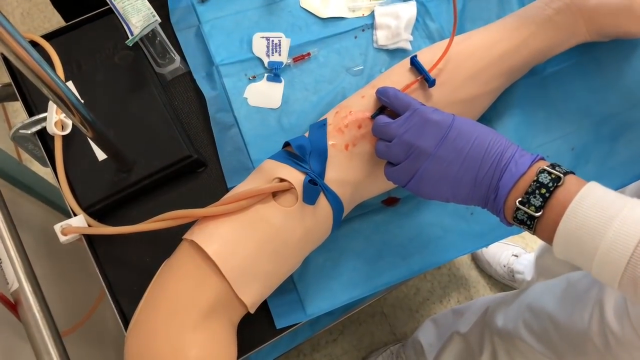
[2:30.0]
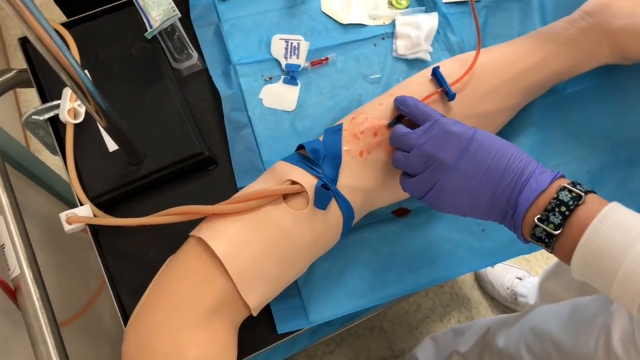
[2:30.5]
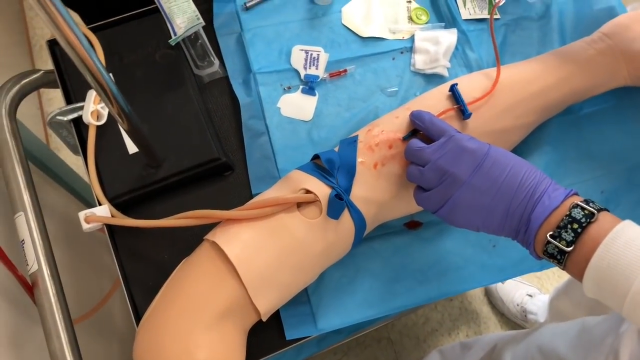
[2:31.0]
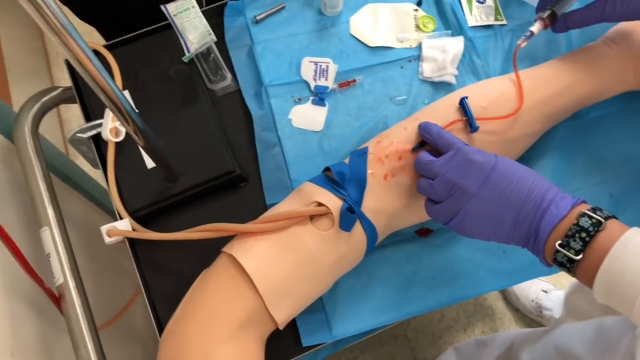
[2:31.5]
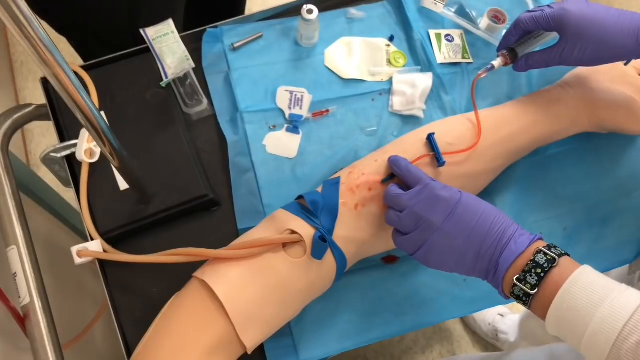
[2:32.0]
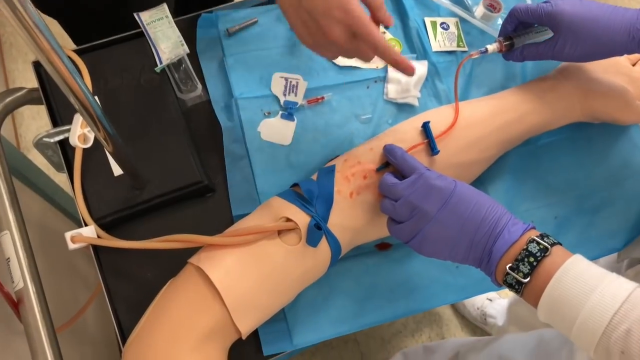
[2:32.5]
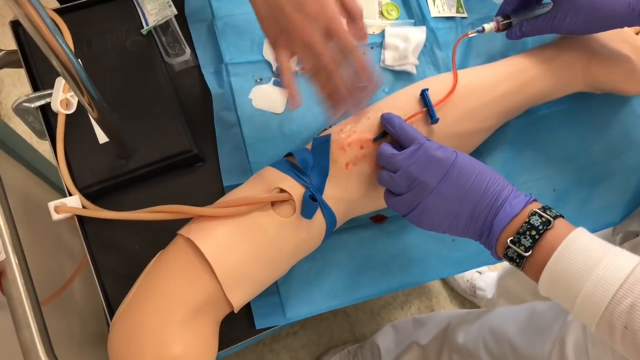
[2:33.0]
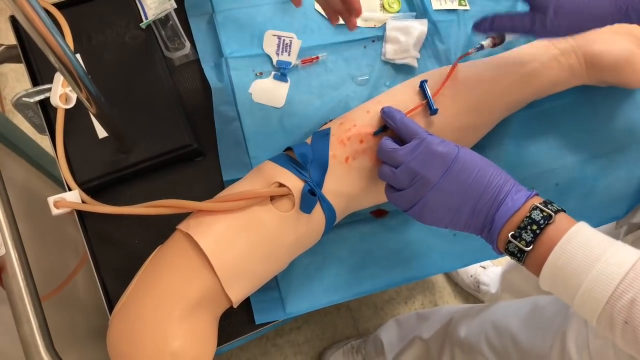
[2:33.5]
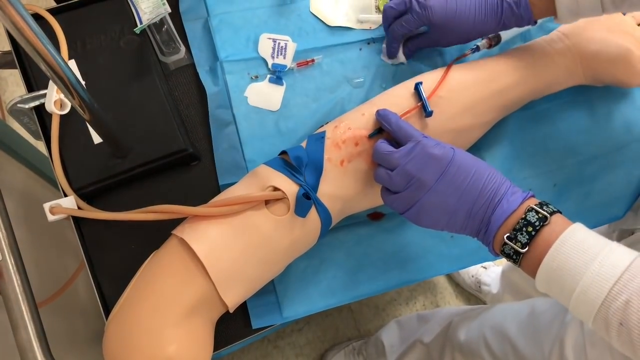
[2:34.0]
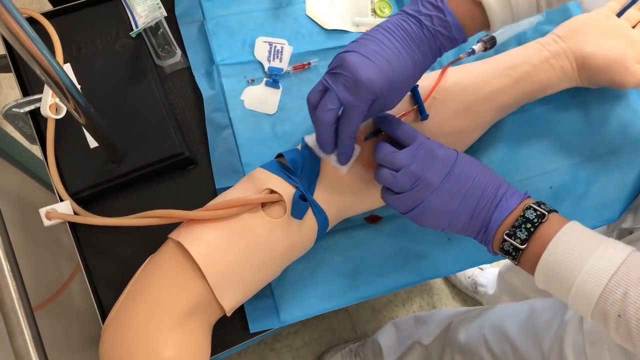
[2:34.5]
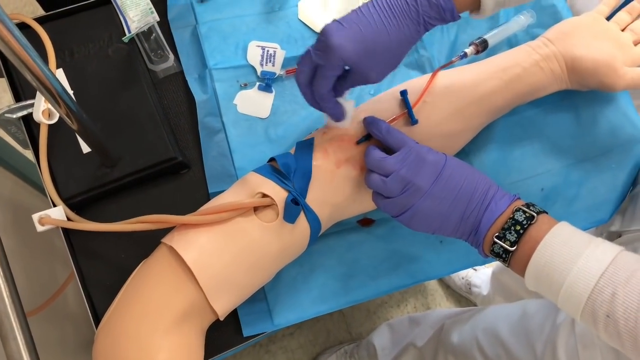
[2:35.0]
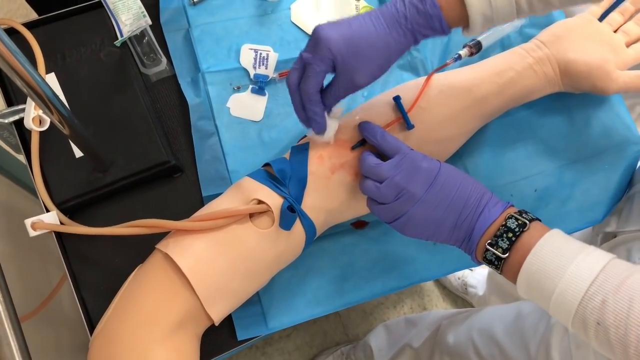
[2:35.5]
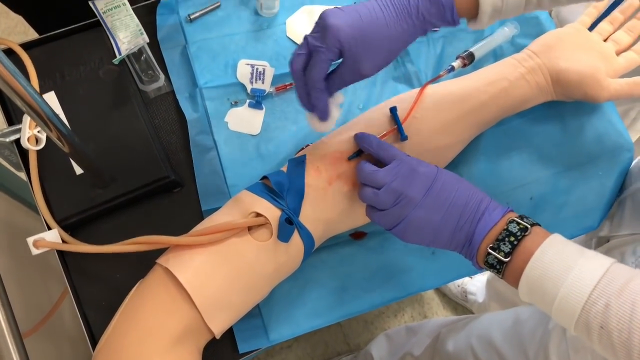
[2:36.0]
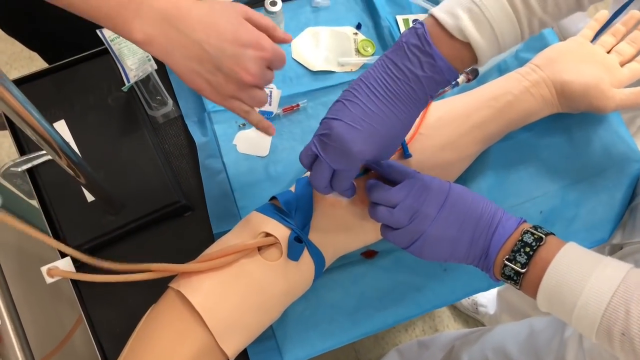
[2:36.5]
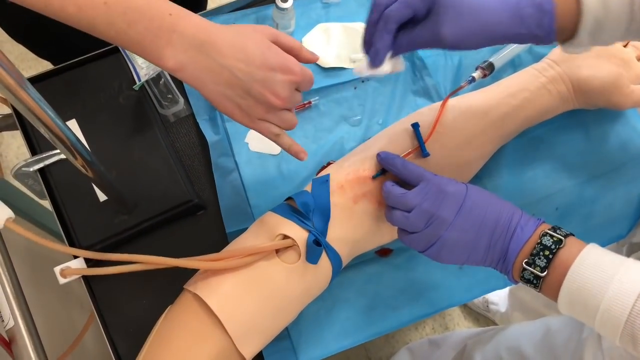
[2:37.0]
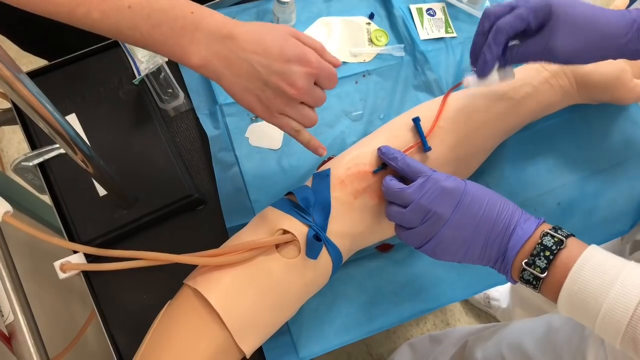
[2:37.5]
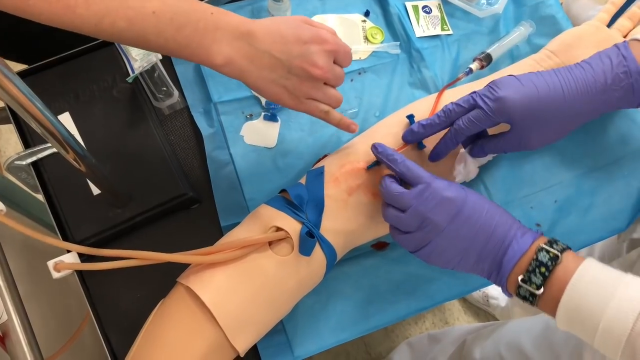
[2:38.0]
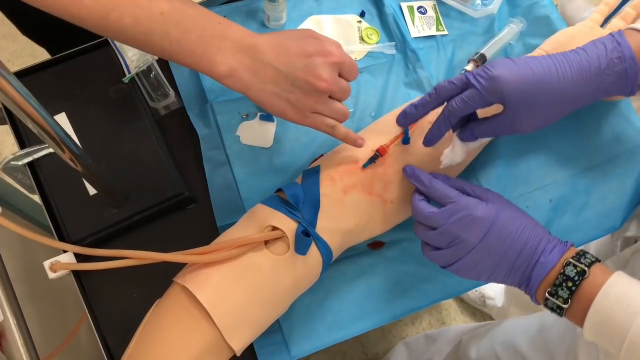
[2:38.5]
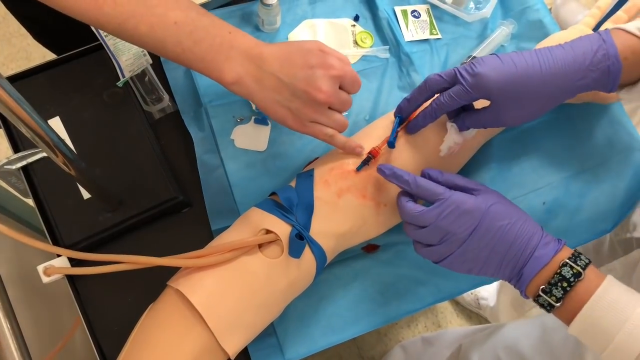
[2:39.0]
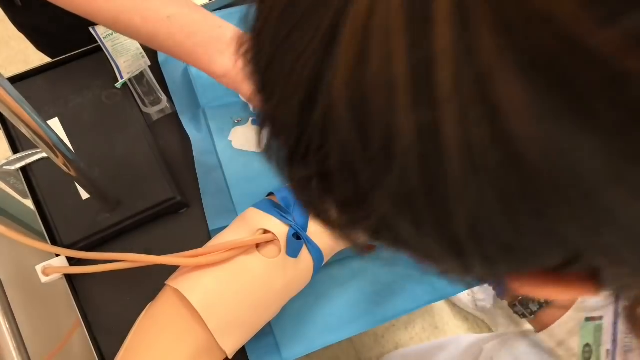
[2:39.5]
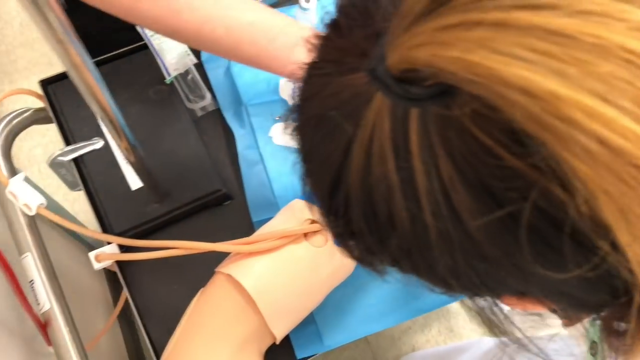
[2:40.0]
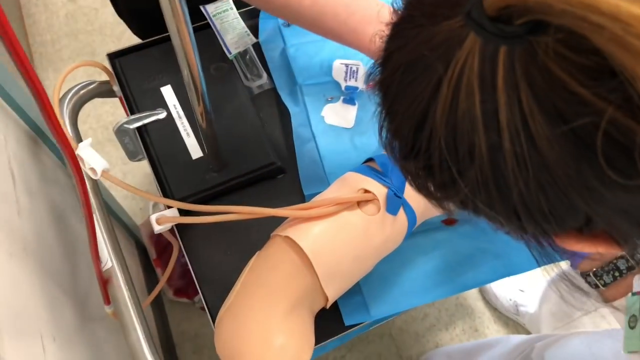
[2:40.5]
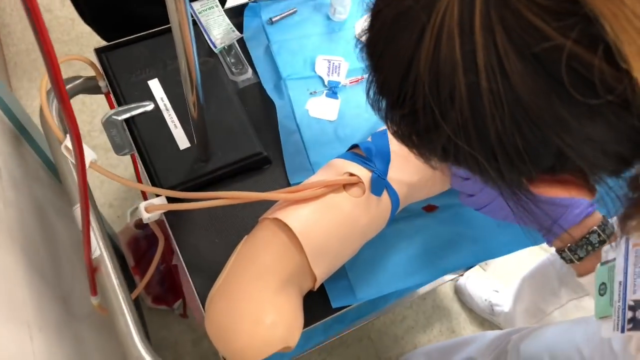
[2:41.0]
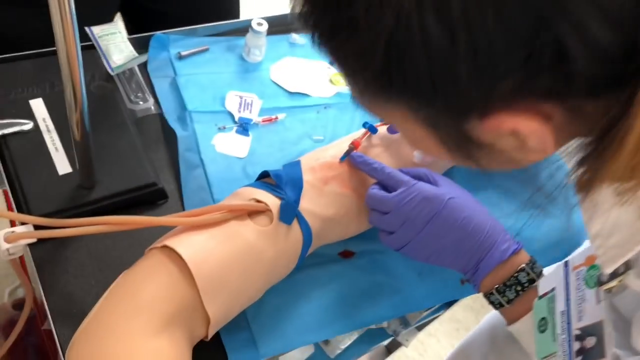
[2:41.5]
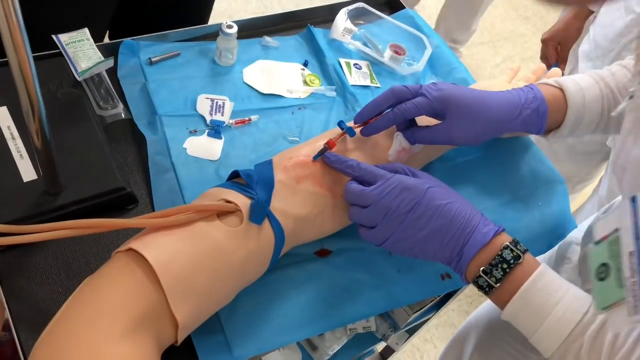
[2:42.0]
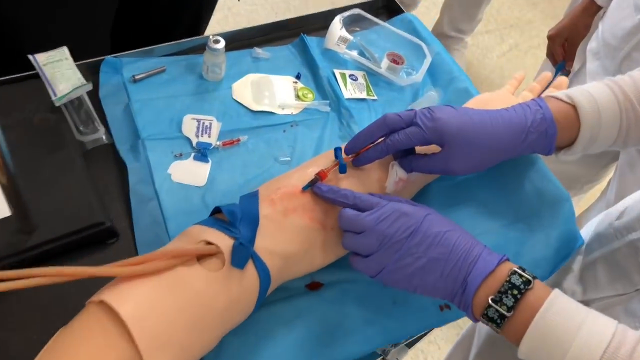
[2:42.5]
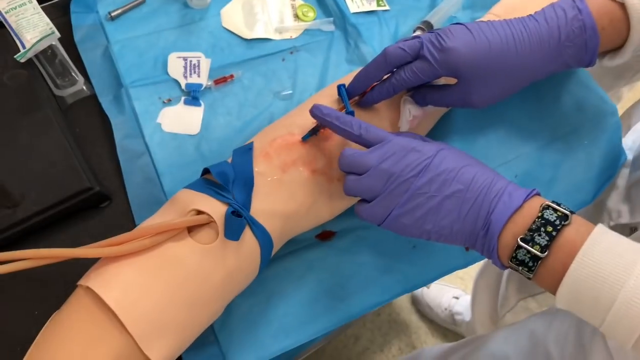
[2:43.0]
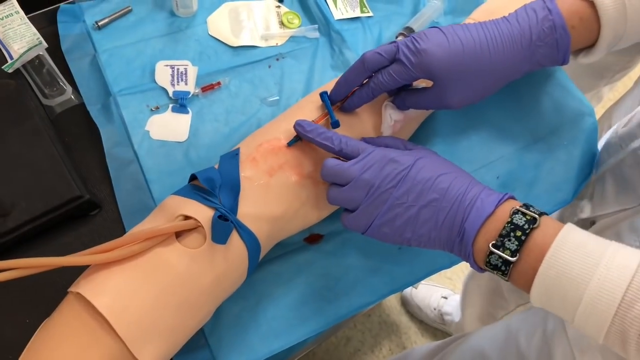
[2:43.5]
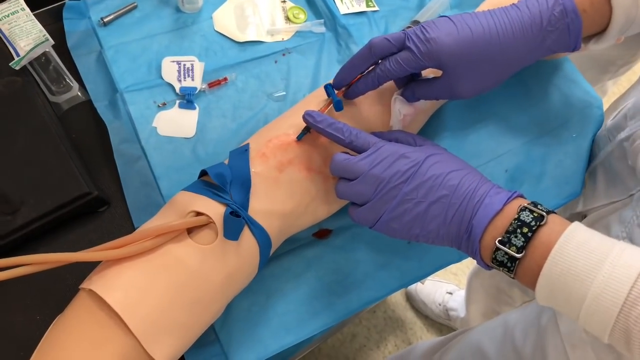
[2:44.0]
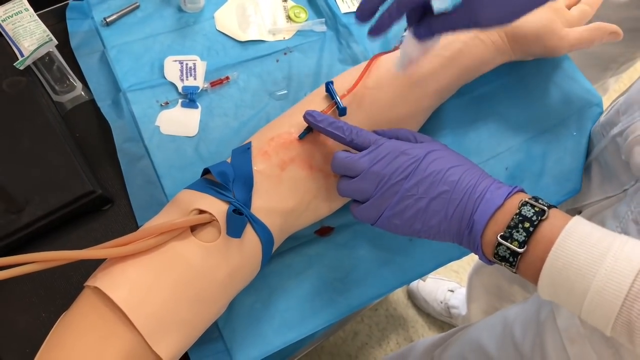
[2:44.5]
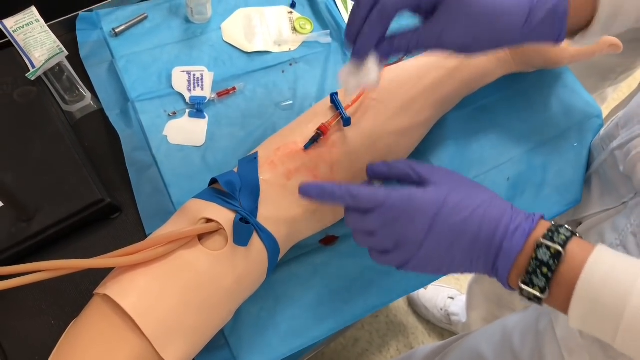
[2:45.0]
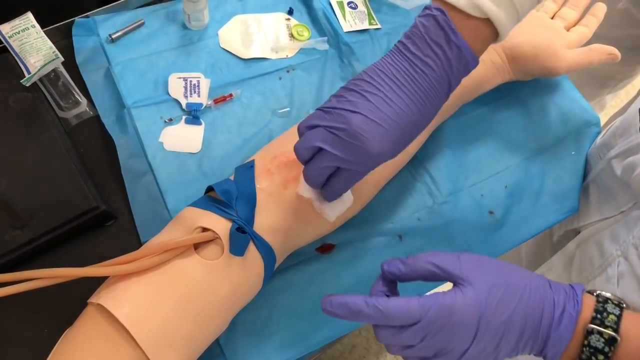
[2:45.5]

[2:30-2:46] There appear to be medical professionals in what appears to be a building with walls and decorations, with displays of anatomy in the background. The door is ajar. The medical professionals wear white shirts, white pants and white shoes. A cart full of medical supplies is in the main view and takes up most of the video. The medical professionals seem to be in an educational environment, as a fake human arm is lying forearm side up on the cart. They appear to be practicing phlebotomy with an instructor nearby, who visually instructs with their hands on what to do and what not to do when inserting a needle into the practice forearm. The student actively practicing, who appears to be wearing purple gloves, appears to be female as her head enters the shot; she has long hair and a floral watch.